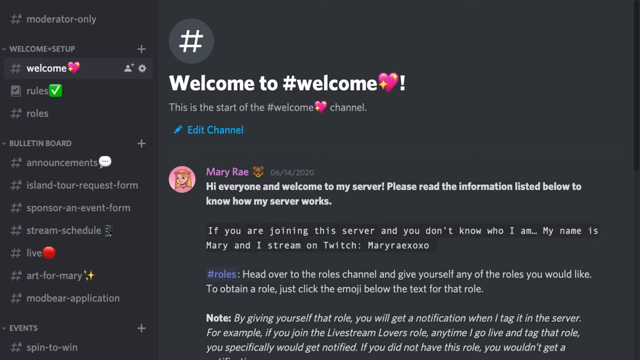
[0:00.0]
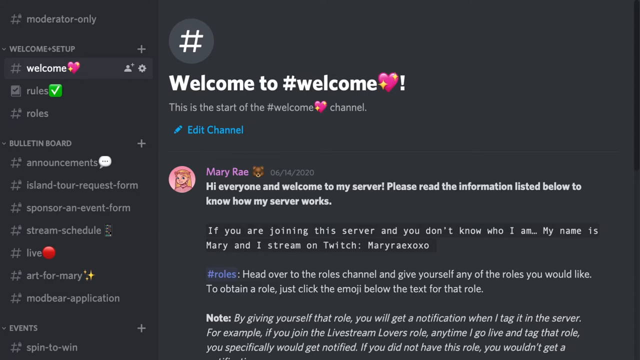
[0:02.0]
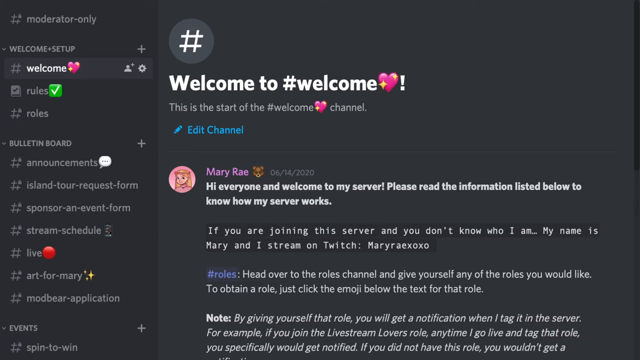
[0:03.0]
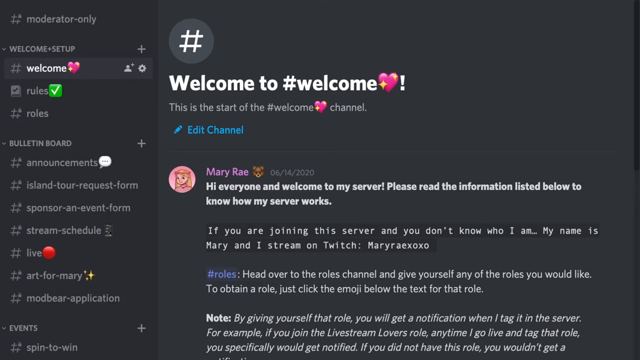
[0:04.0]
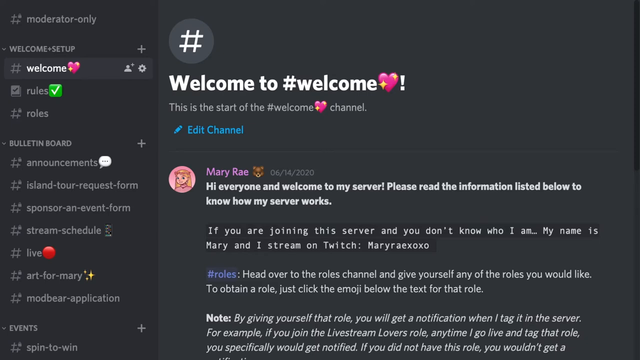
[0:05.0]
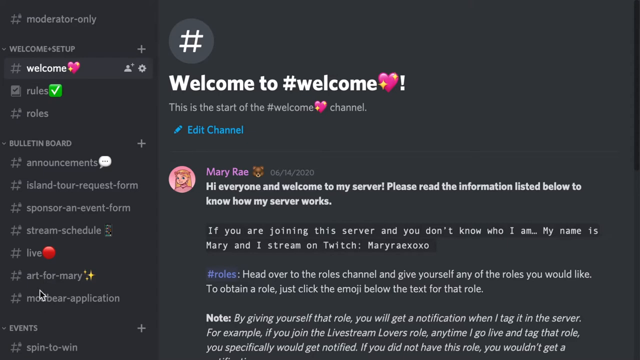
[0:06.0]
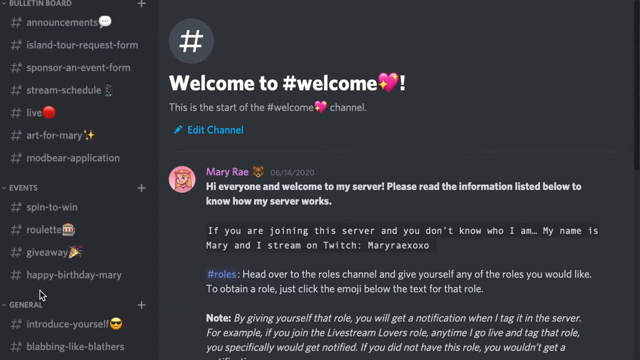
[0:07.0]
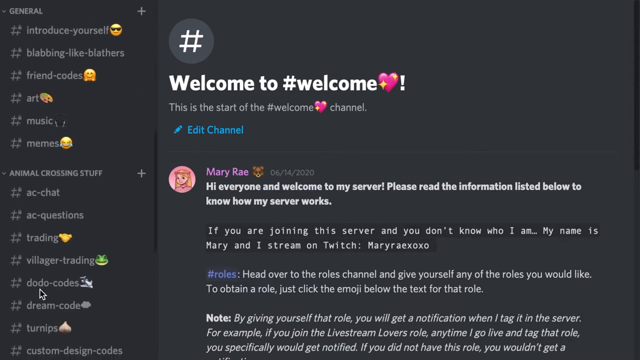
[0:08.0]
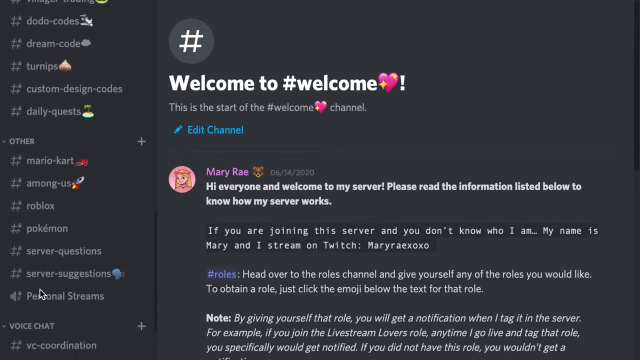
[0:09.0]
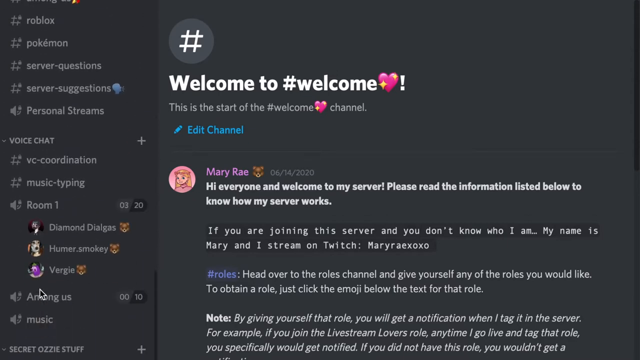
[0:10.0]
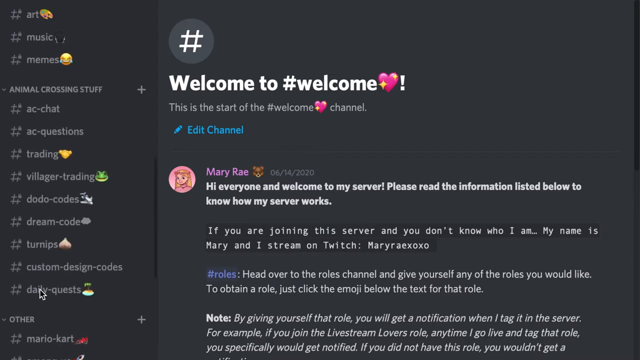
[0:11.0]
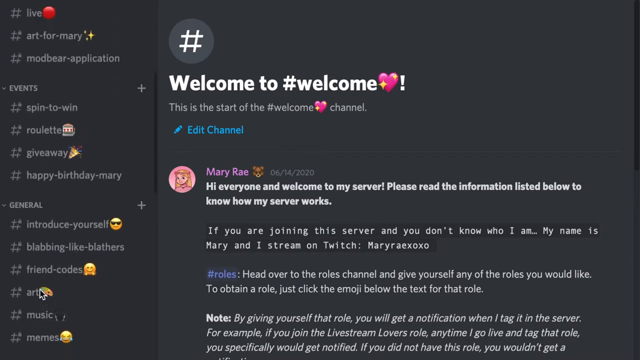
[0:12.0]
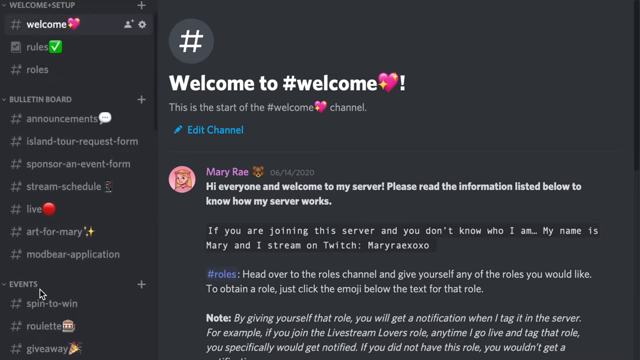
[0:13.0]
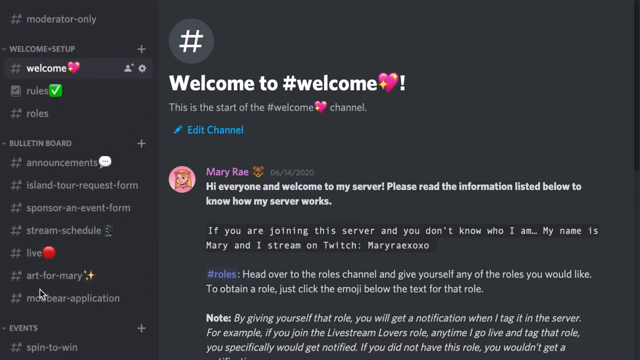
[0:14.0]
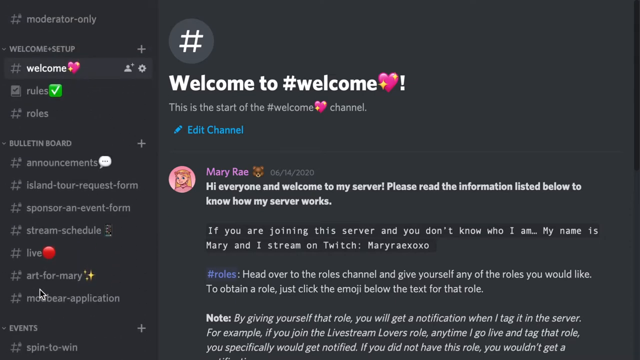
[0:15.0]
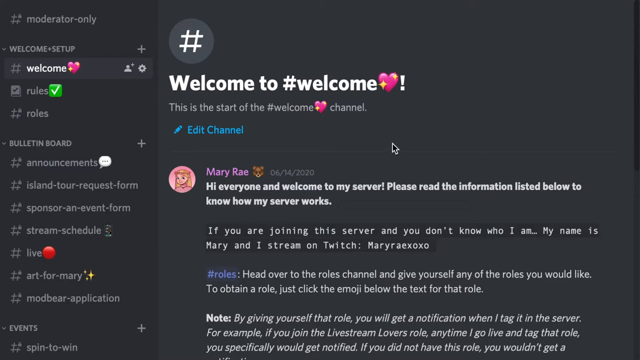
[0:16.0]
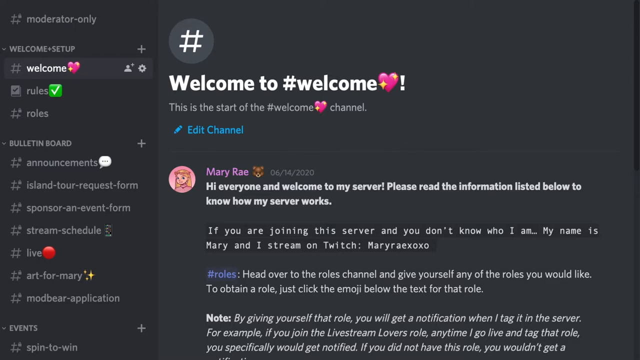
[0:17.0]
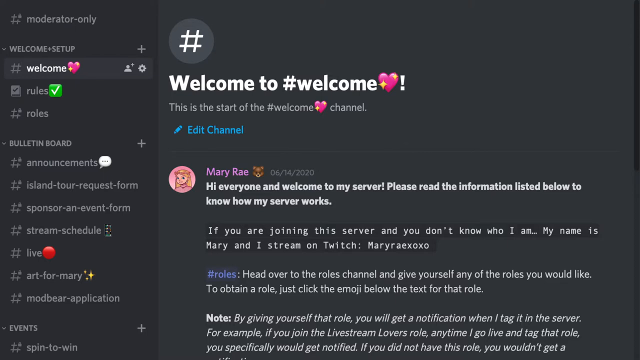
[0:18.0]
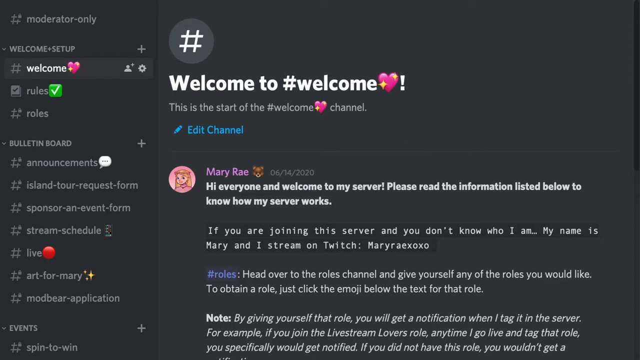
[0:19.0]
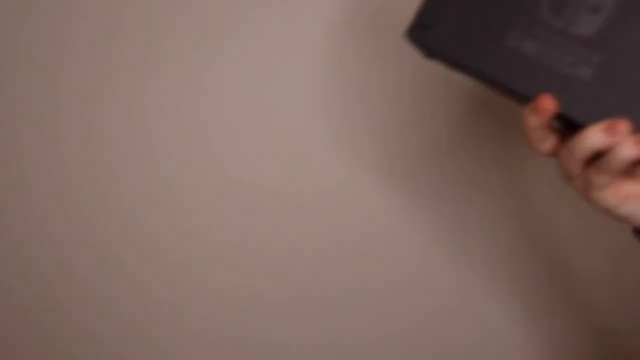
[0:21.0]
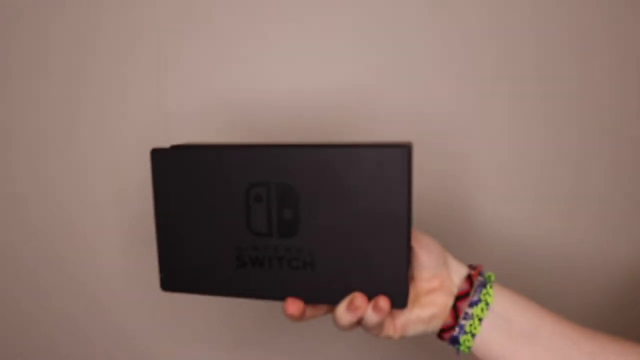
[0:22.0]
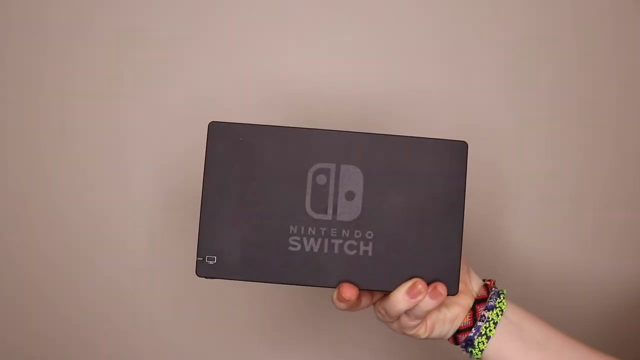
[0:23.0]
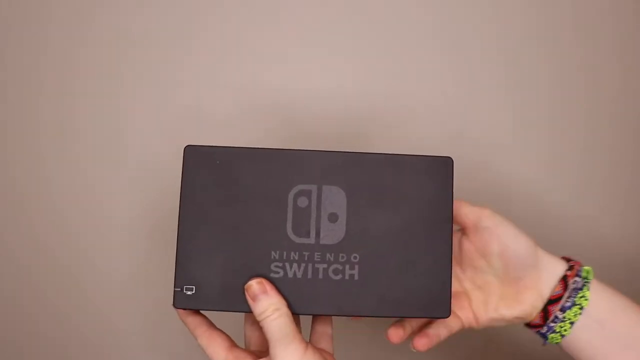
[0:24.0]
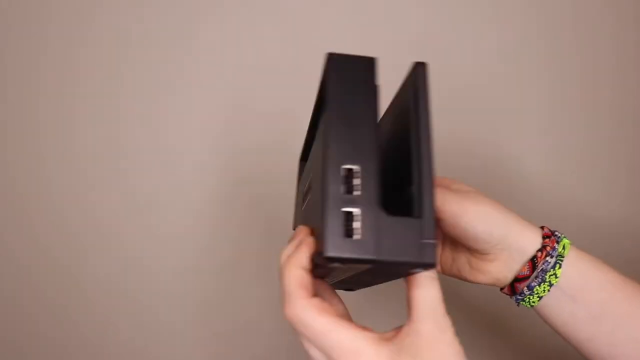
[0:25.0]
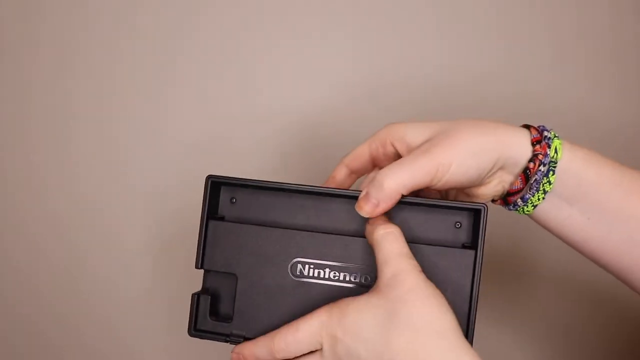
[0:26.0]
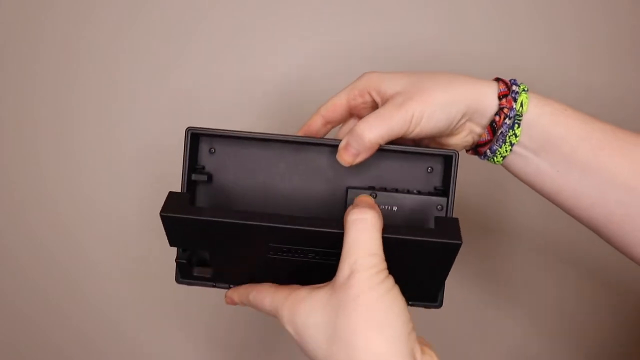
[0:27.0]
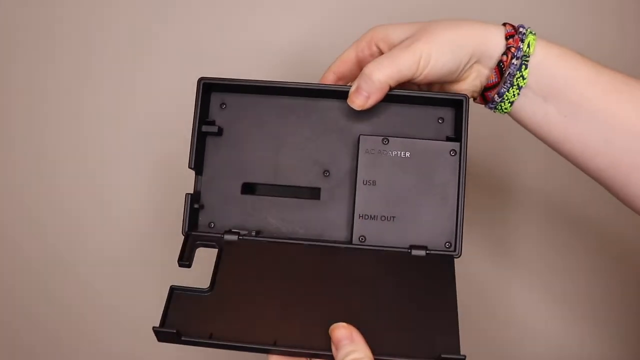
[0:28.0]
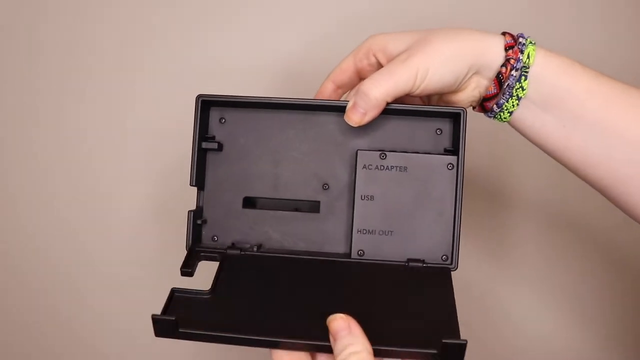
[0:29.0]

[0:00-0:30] A website with a black background is shown. Text reads "welcome to #welcome," with a pink heart and an exclamation point next to it. A large hashtag circled in gray is at the top, and "moderator only" appears at the very top. The text "welcome setup" is also visible. Someone has highlighted the top category, "welcome," and scrolls through it. There is an entry from Mary Rae, who says "hi everyone, welcome to my server please read the information listed below to know how my server works," then goes on to say "if you're joining" and welcomes everybody. Next, a Nintendo Switch box is shown by someone wearing bracelets braided out of thin rope around their wrist. They put their right hand into view of the camera, turn the box around, and then open it with their left hand, showing the inside of the box. The front clearly says "Nintendo Switch." They hold the box open, then close it back up, and the back says "Nintendo."